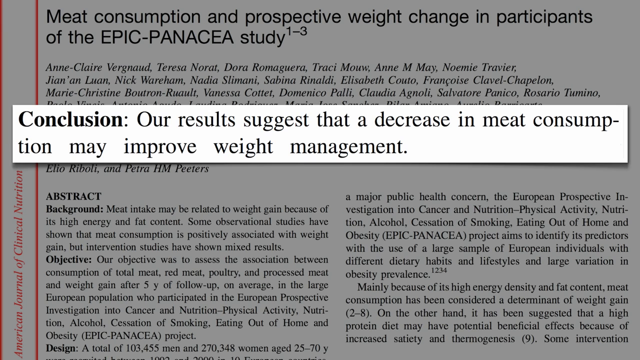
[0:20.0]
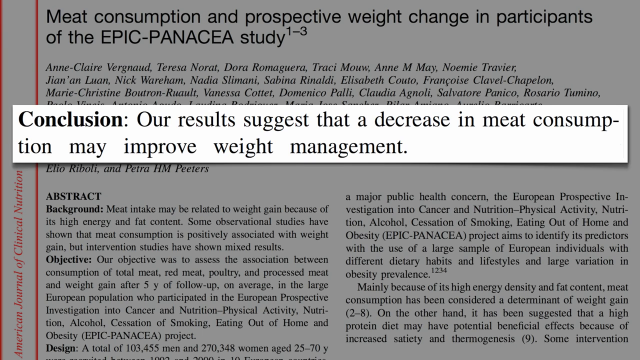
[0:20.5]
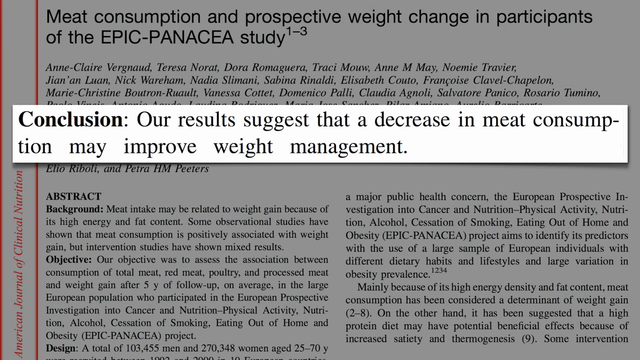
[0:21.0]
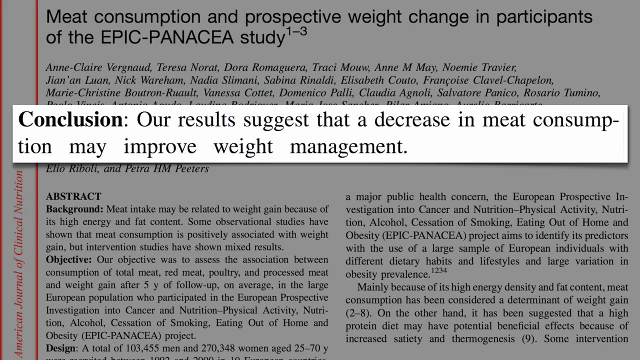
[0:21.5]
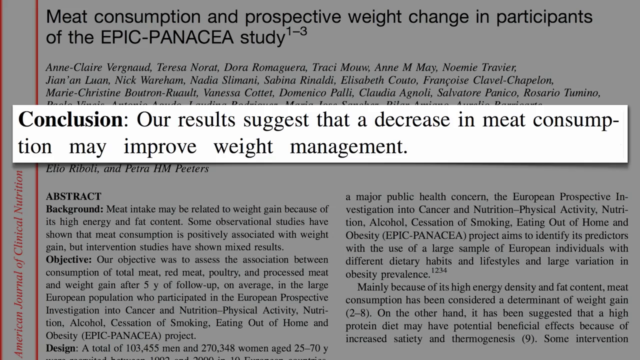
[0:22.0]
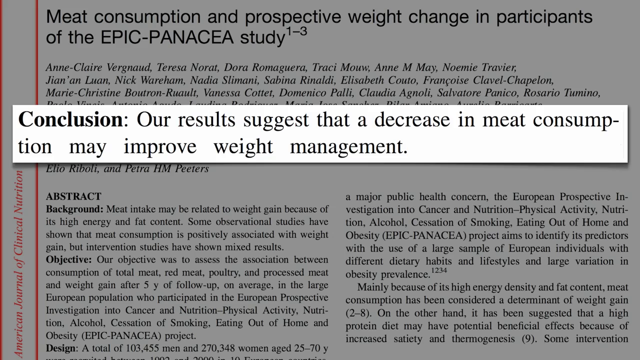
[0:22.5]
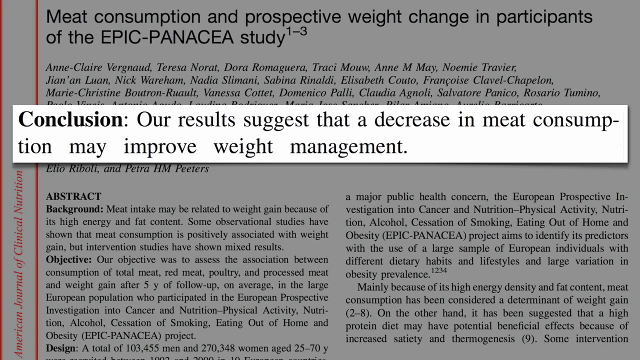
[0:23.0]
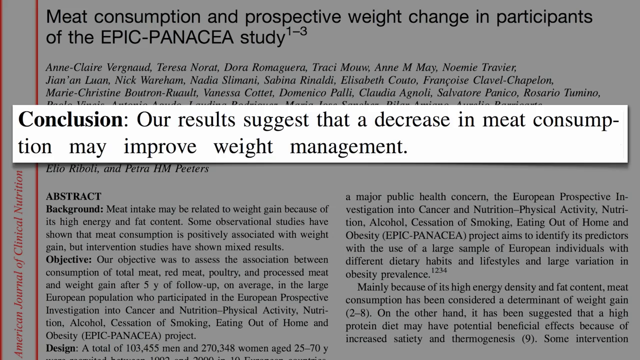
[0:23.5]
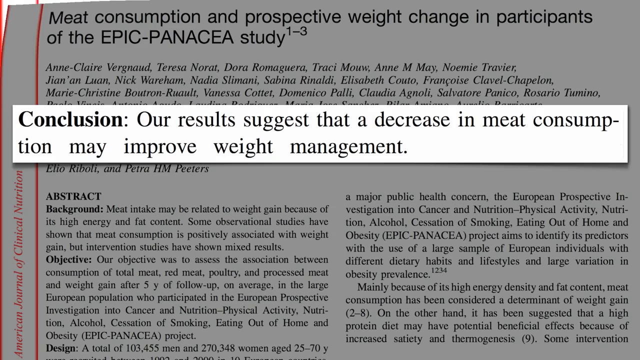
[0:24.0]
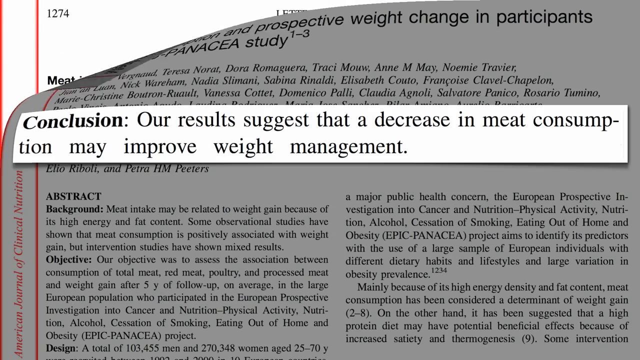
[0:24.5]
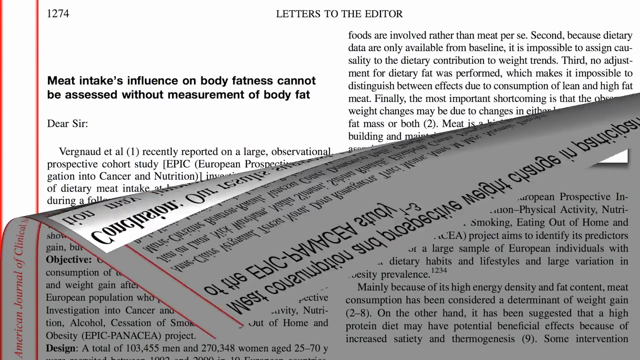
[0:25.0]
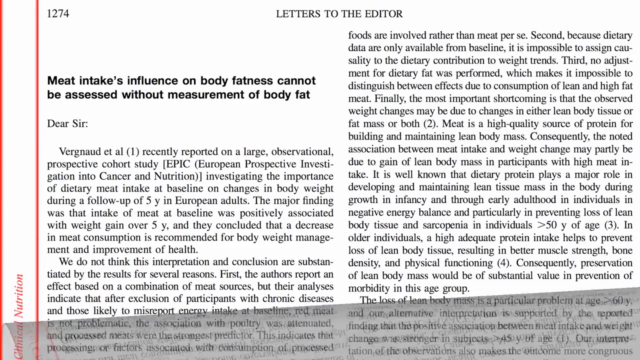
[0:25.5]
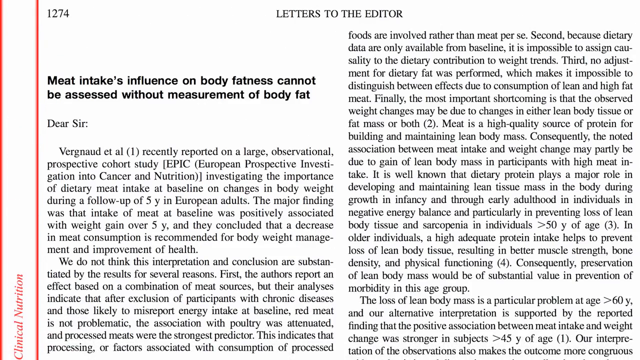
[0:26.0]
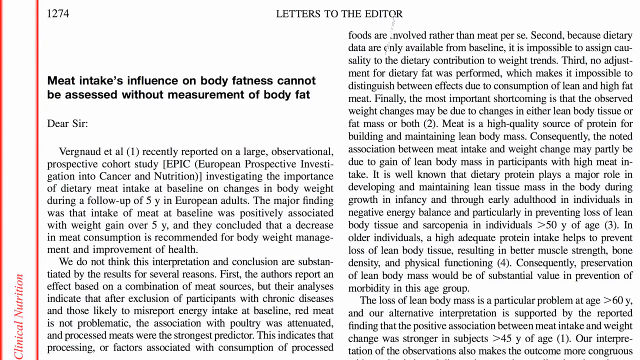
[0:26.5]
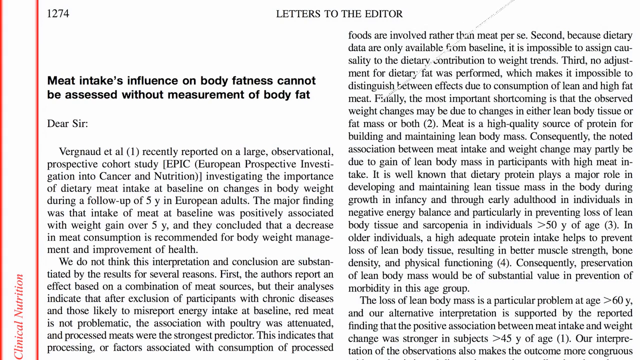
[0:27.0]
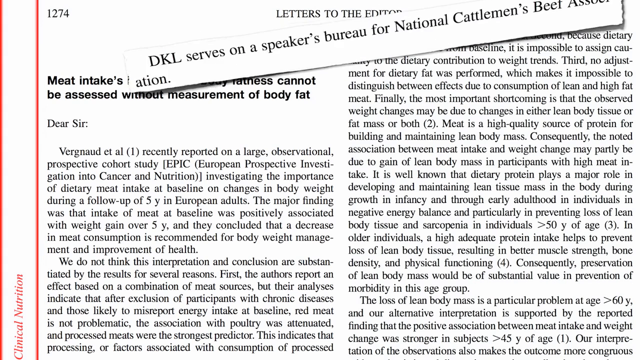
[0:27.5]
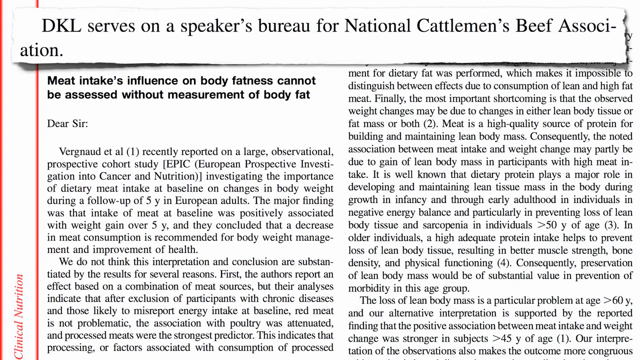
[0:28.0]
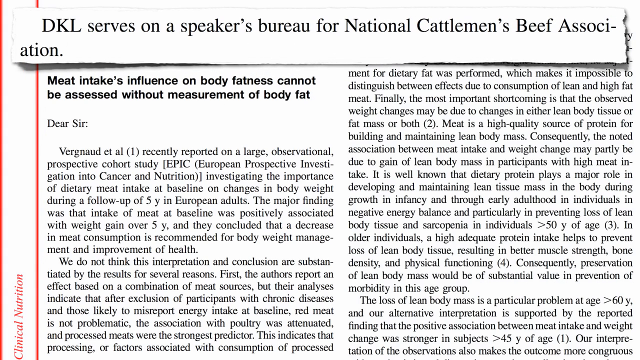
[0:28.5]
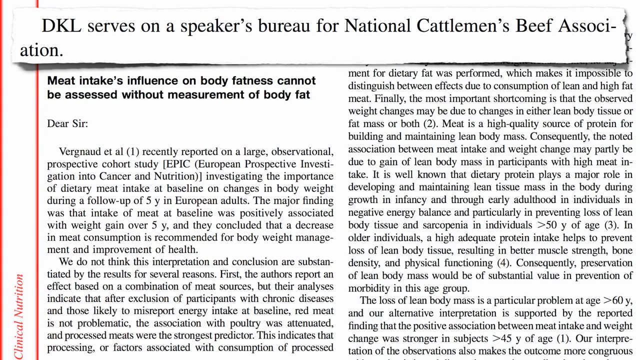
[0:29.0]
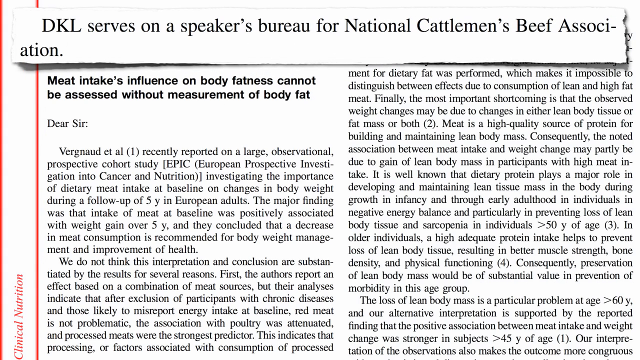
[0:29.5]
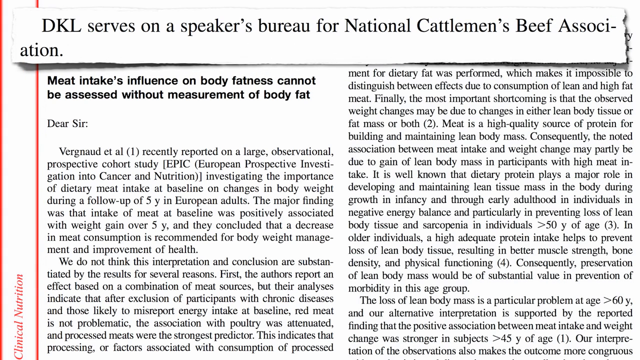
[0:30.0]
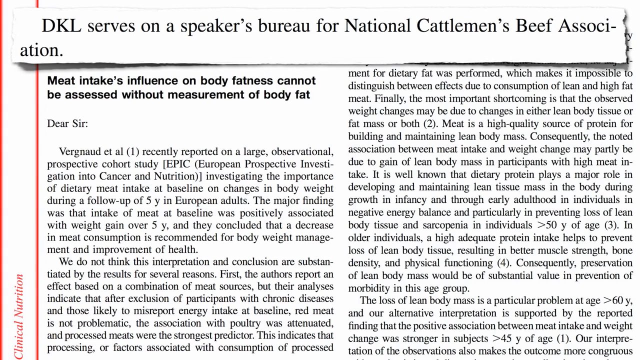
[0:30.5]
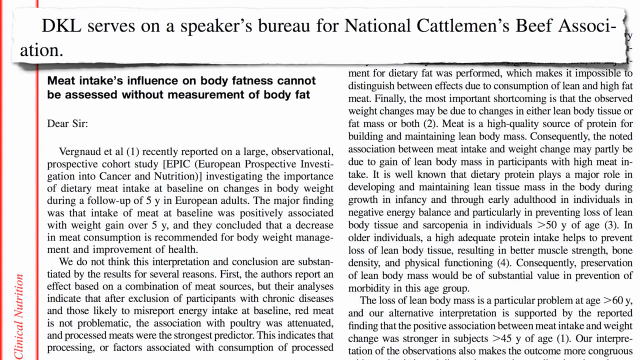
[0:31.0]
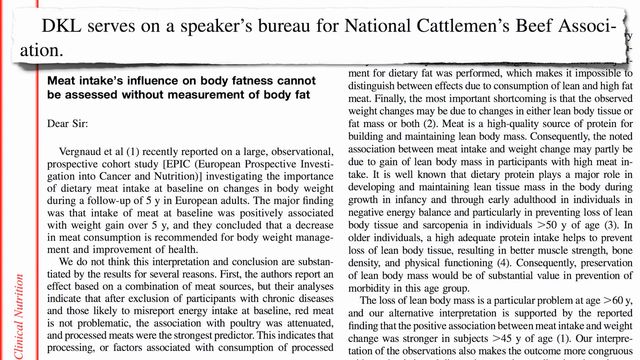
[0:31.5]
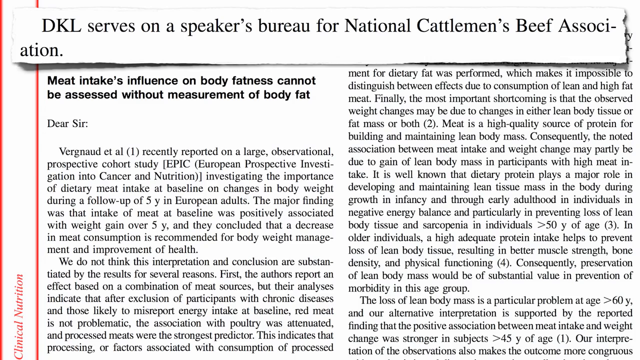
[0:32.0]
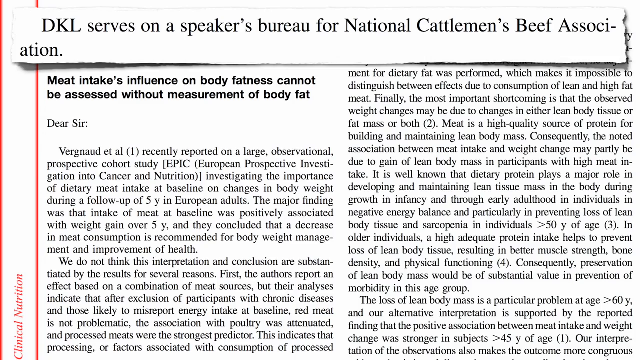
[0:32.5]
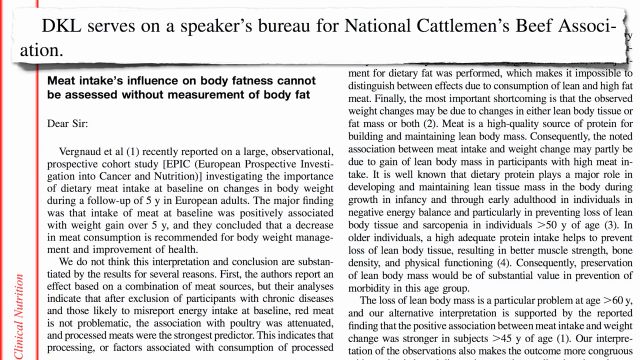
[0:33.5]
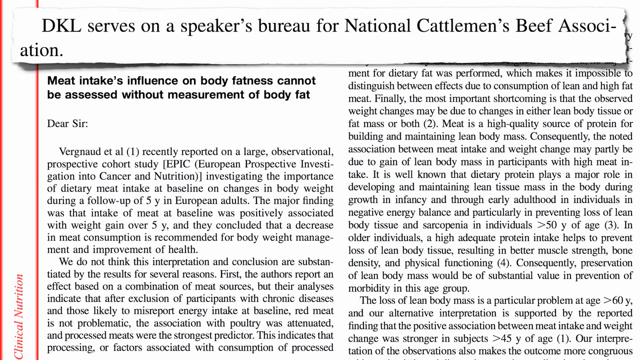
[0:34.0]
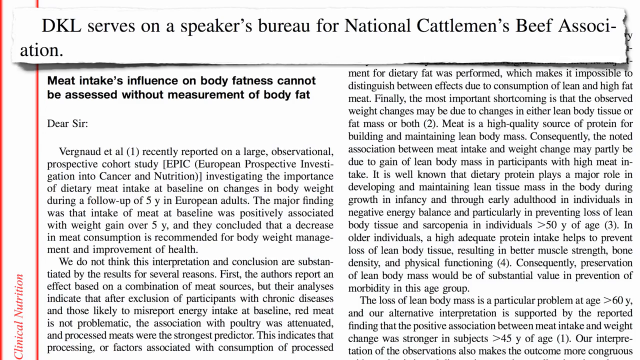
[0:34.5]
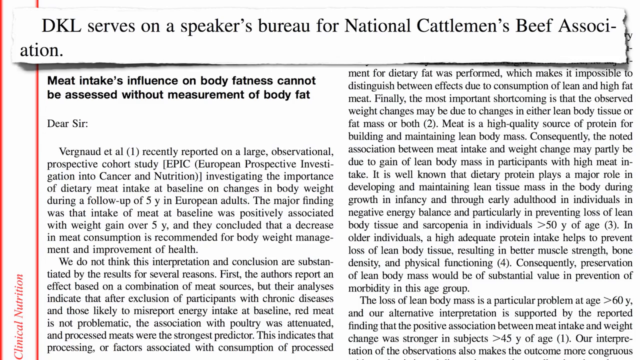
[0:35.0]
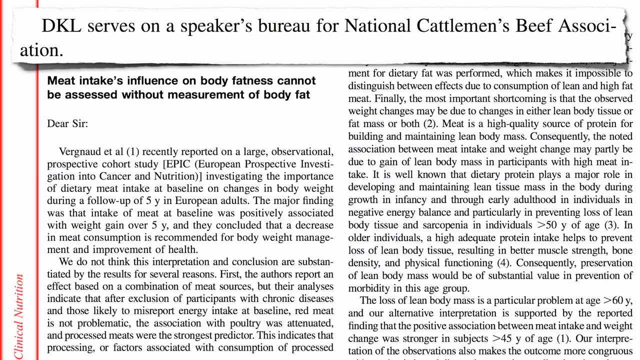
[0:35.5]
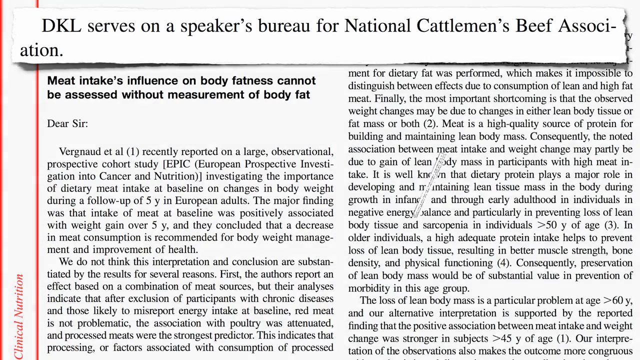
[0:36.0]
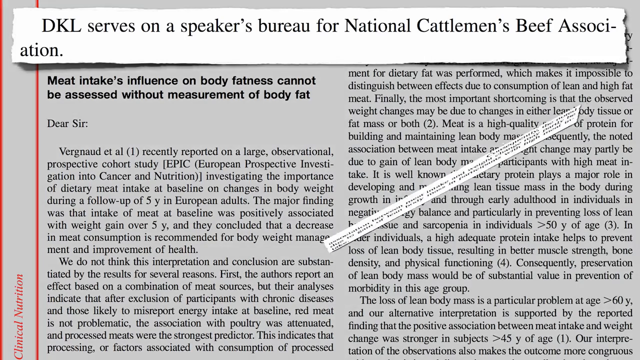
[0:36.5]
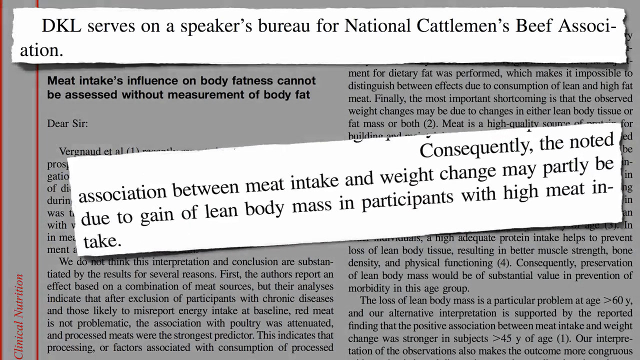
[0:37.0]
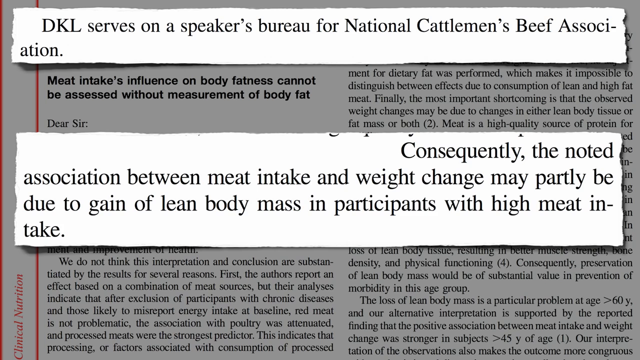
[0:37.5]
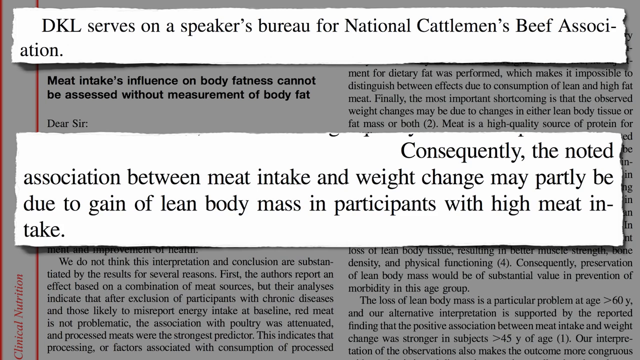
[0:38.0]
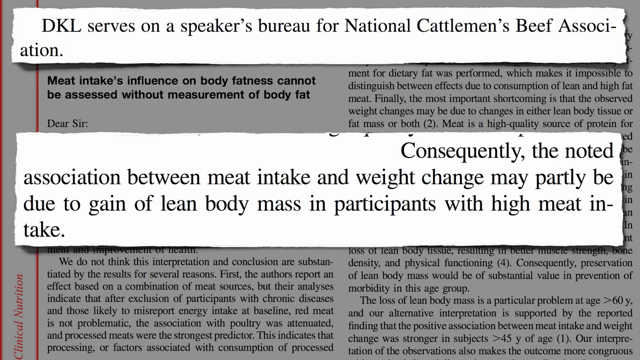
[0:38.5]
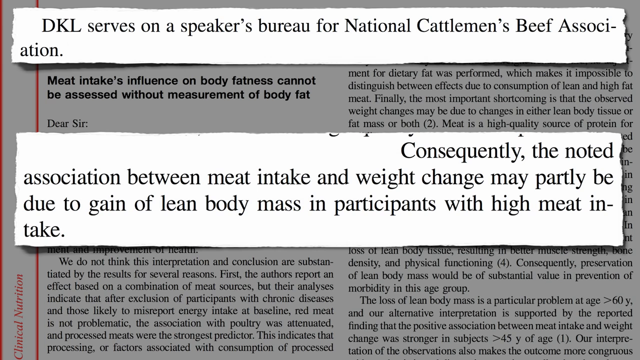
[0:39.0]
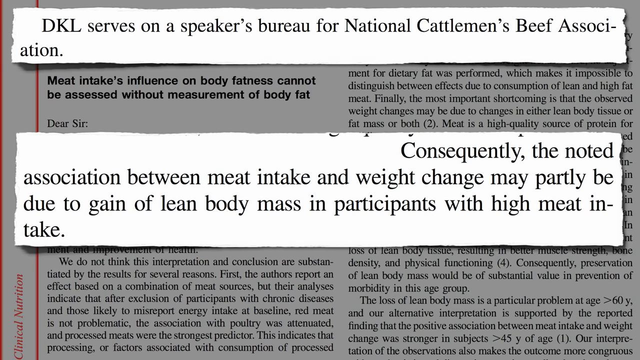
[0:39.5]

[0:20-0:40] An academic article is on screen, with a rectangular box highlighting its conclusion section, which says something to the effect that a decrease in meat consumption may improve weight management. The image then slowly peels downward, starting from the upper left corner, revealing another piece: a letter to the editor in black and white print with a vertical red border on the left. Its topic appears to be meat intake and fatness. A thin rectangular box brings highlights from the article forward: the first one appears on the page, and a few seconds later a second one appears under it.